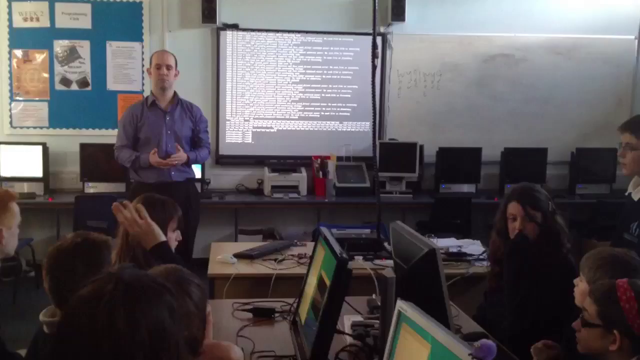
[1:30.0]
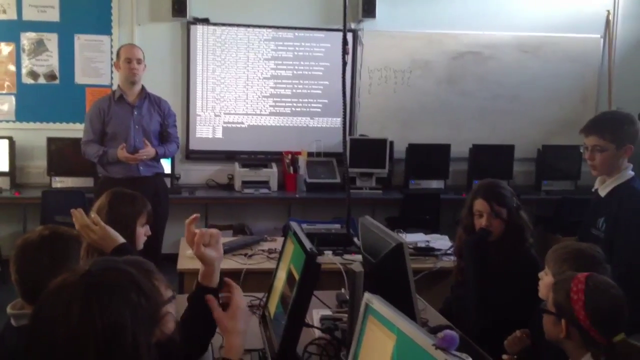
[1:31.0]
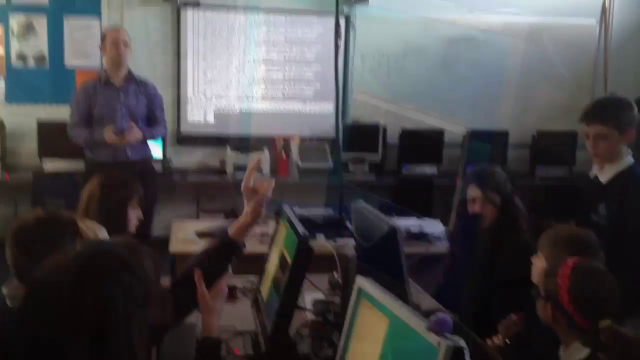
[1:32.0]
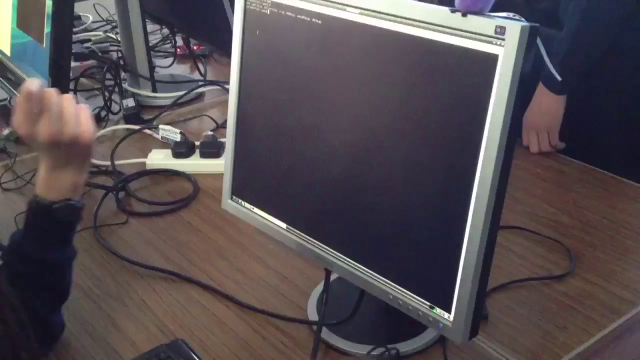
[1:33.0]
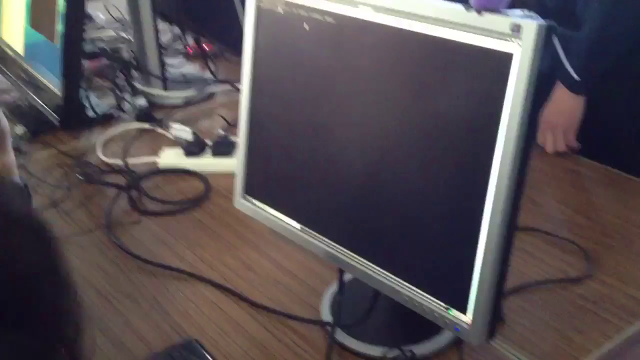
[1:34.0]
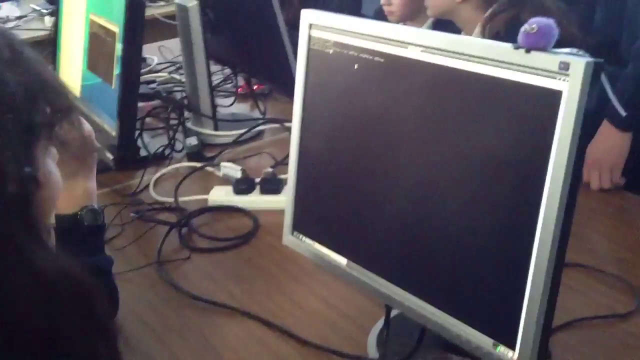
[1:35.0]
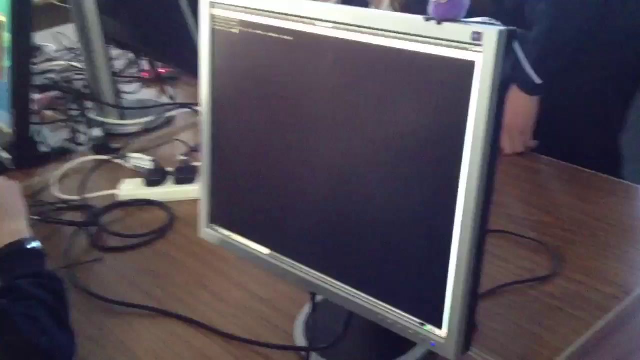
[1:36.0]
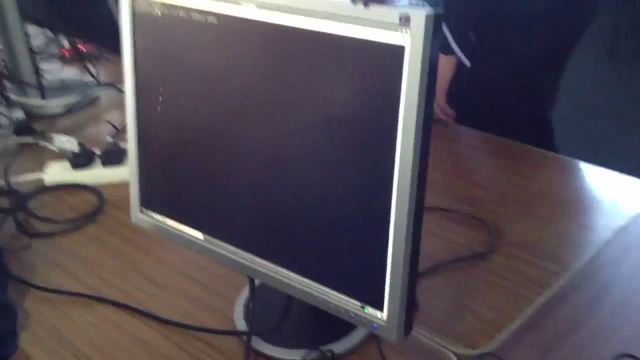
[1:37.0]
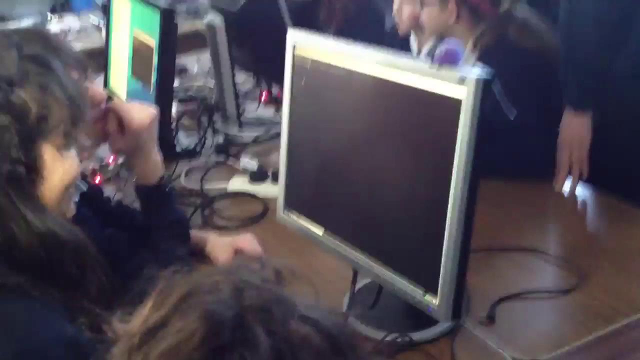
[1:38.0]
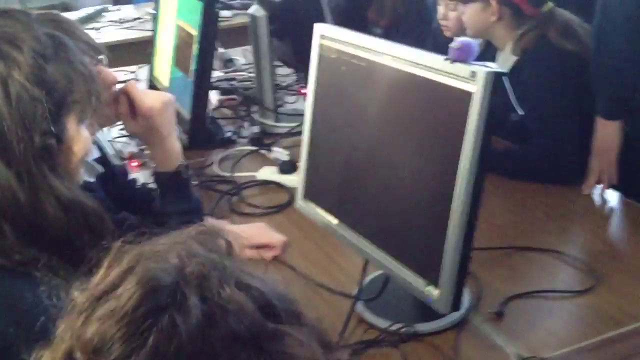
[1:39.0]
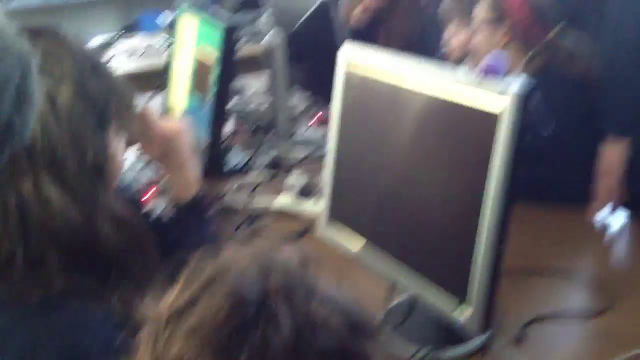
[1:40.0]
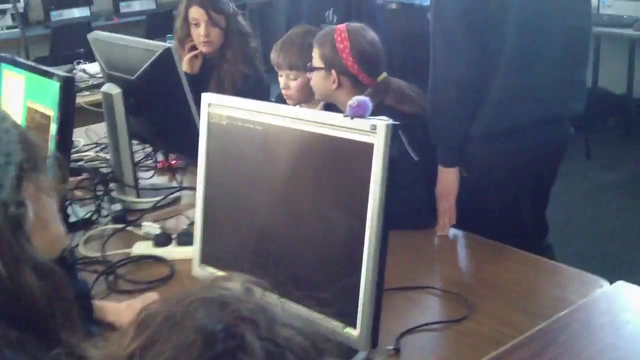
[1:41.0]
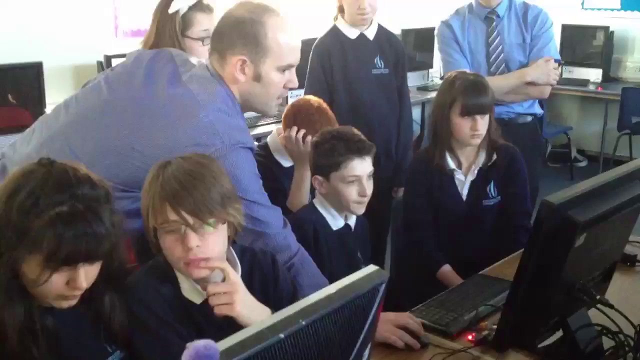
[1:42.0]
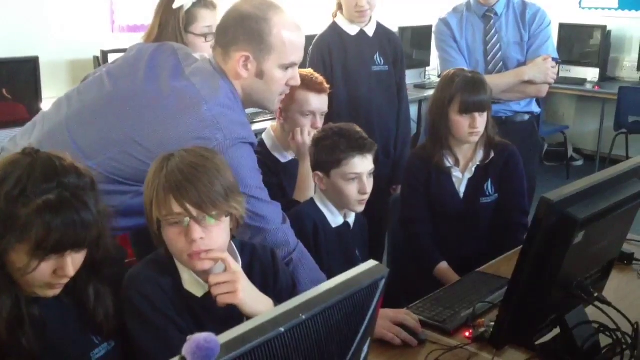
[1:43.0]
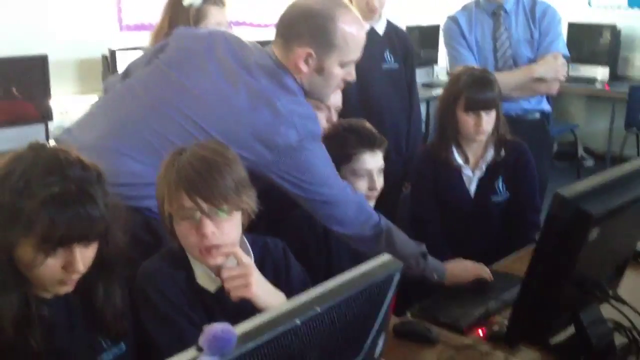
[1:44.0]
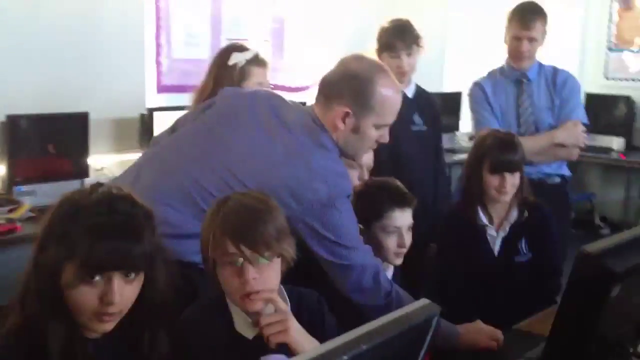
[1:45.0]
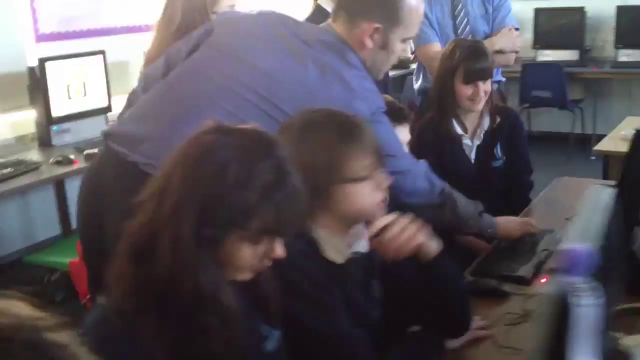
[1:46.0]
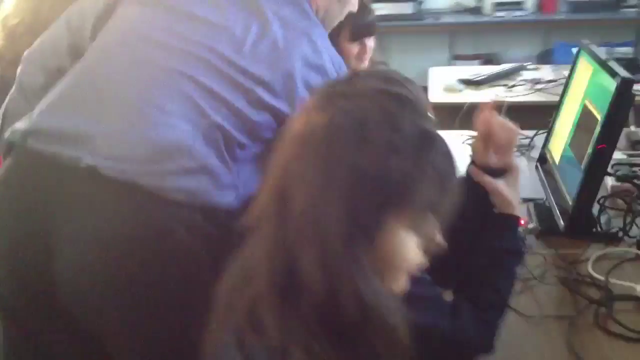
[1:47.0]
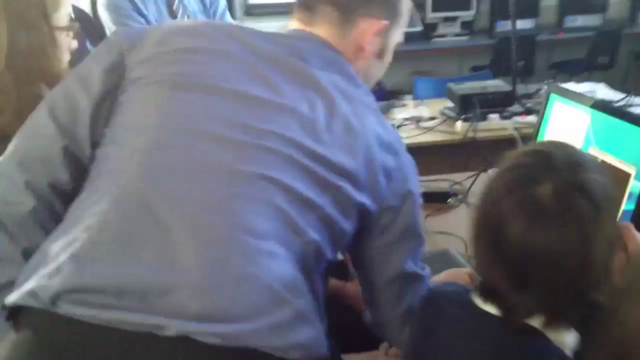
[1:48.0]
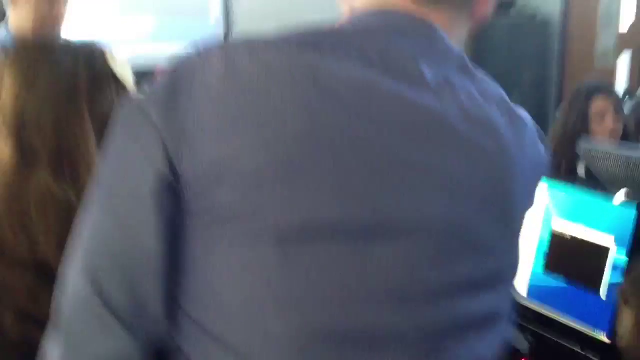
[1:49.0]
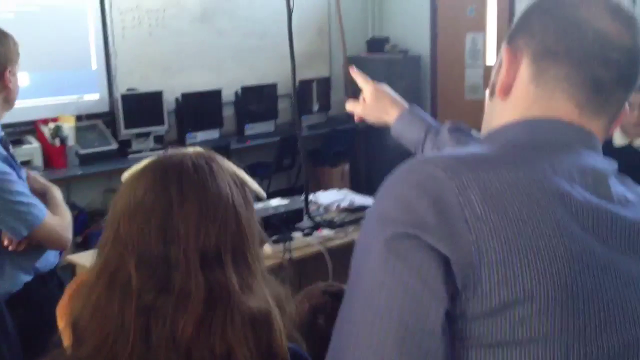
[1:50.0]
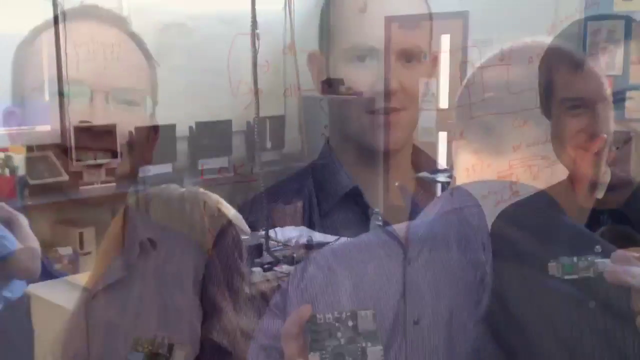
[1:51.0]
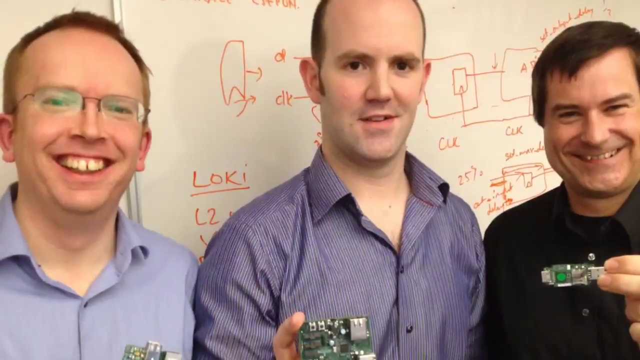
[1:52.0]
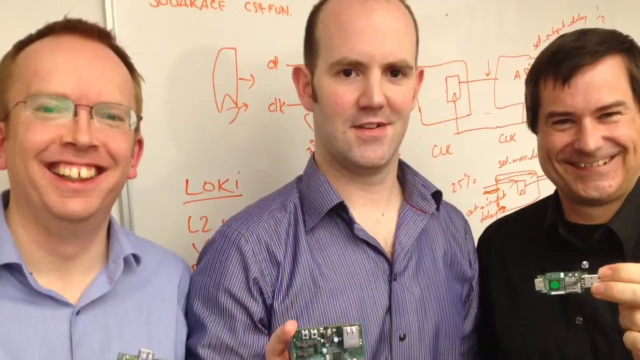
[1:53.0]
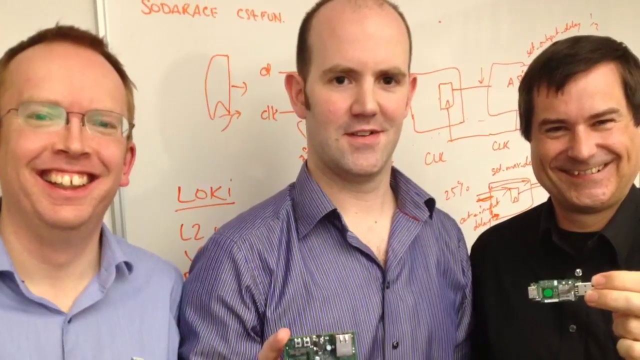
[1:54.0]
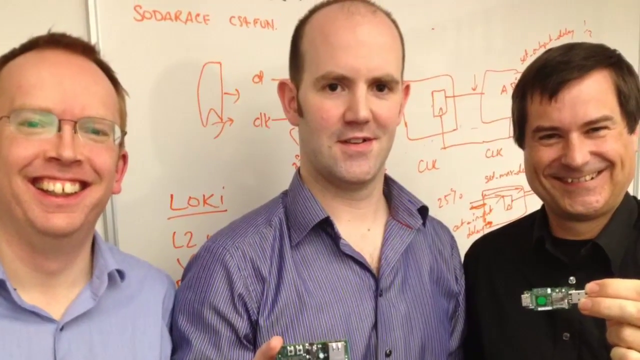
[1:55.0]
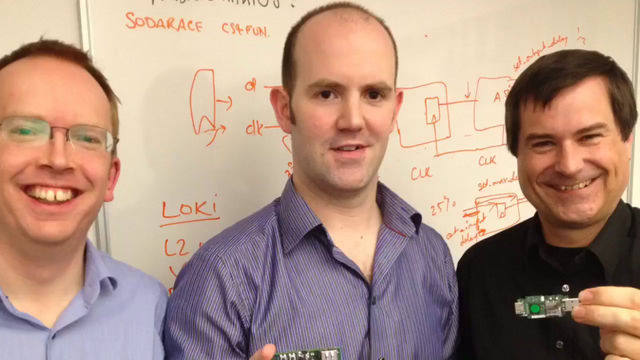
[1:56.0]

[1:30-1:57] In the bottom left of the screen, with the teacher on the left side, two or three students are raising their hands. One is raising the left hand, his right hand holding it up, and he points his index finger. The camera zooms in on a computer screen at an angle, showing the cursor moving around, and the video is shaky. One of the students, a girl, smiles and laughs and looks to the right. The camera looks over a computer and monitor at three kids crowding over to look at a computer screen. A different view of the bottom left corner shows a boy and a girl in a pair looking at a monitor, while the teacher leans behind them, facing another group of students looking at a different monitor. A couple of students stand up as they watch the teacher type something on the keyboard. He reaches over with his right hand and types something in; the camera comes around to his back, then he stands up, motions with his right hand, and points to the projector screen at the front of the room. The video cuts to an image of the teacher in the middle with a different man on each side of him. The man on the left has short red hair, kind of buck teeth with a gap between his teeth, and glasses. The man on the right seems a little older, with brown hair, a wide, thin grin, and dimples in his cheeks. A whiteboard with some diagrams is visible.